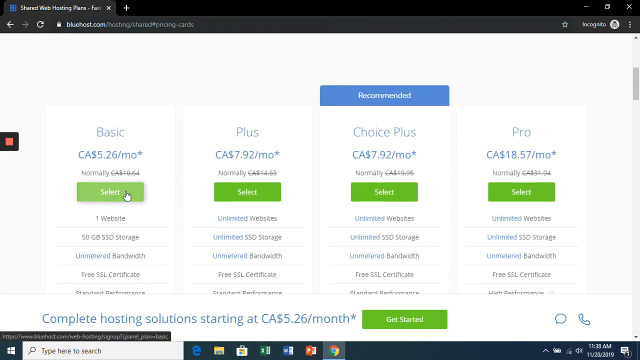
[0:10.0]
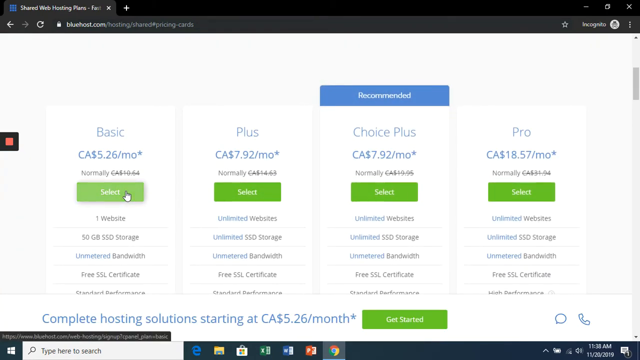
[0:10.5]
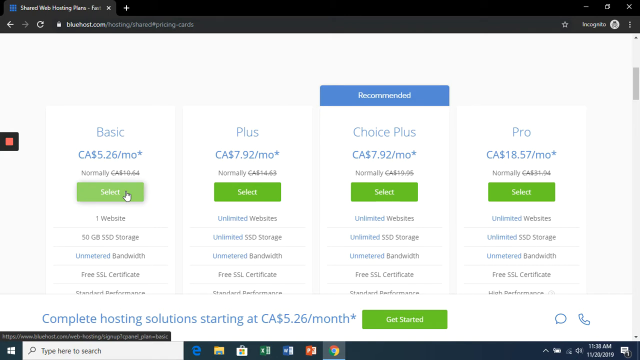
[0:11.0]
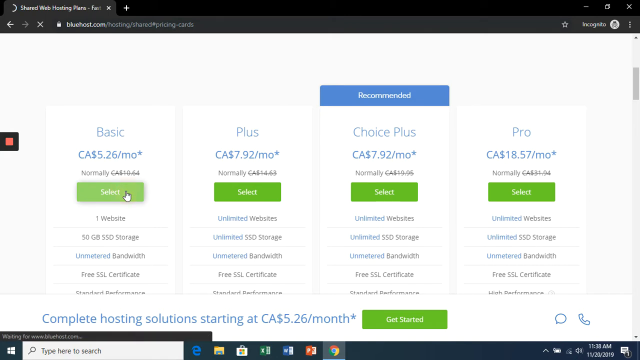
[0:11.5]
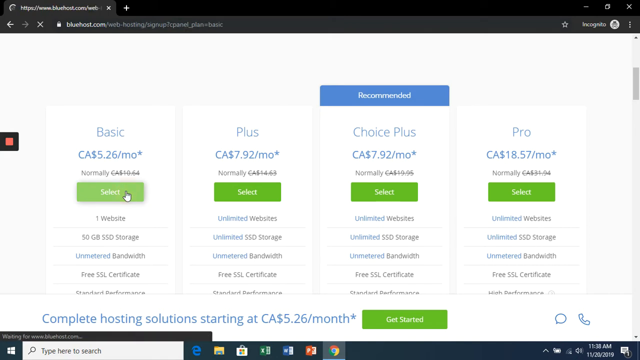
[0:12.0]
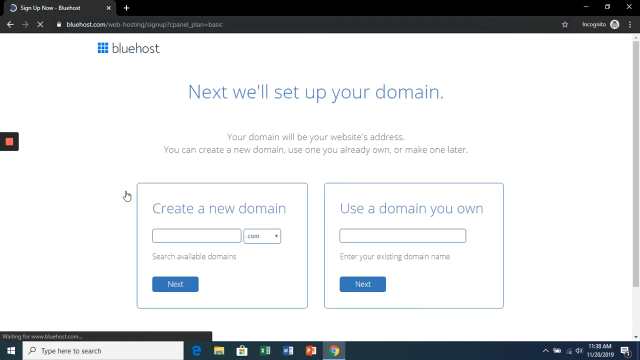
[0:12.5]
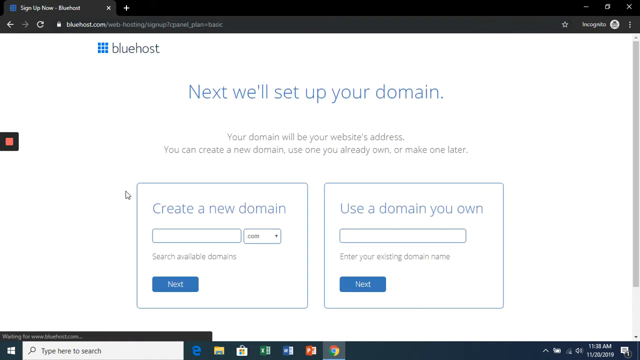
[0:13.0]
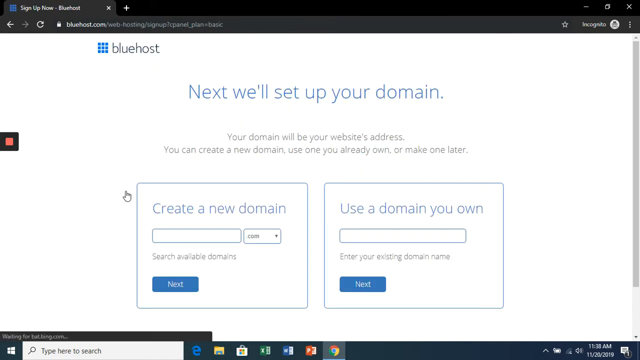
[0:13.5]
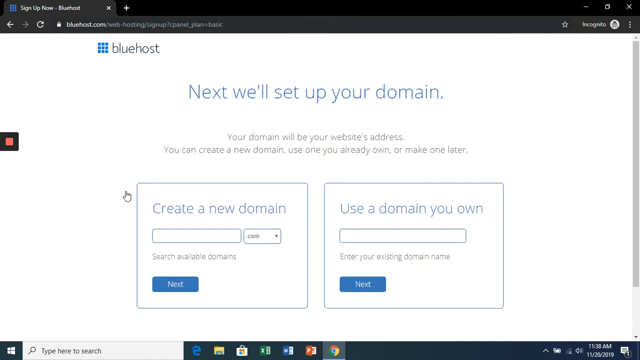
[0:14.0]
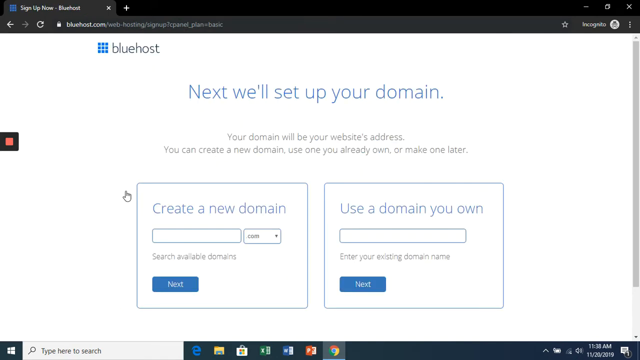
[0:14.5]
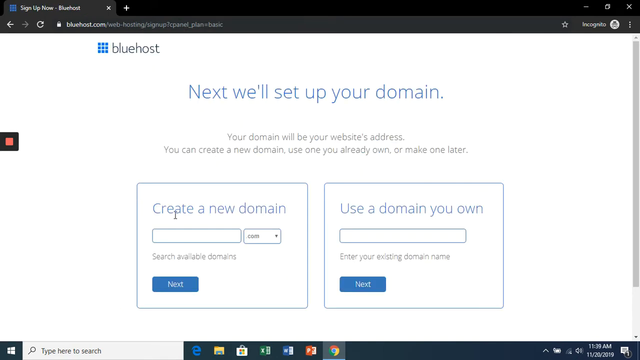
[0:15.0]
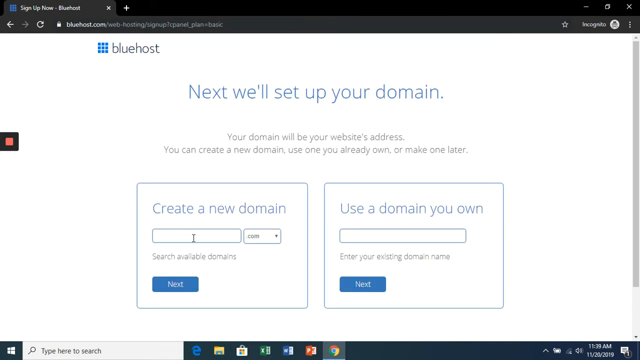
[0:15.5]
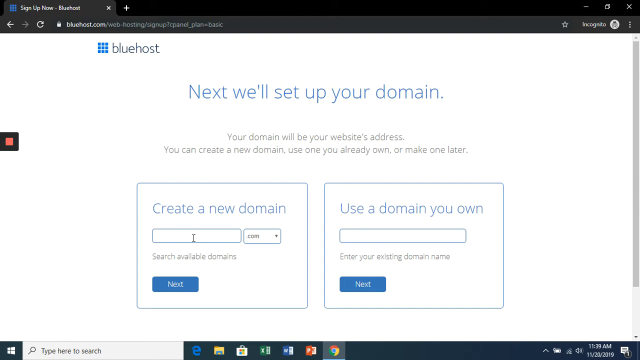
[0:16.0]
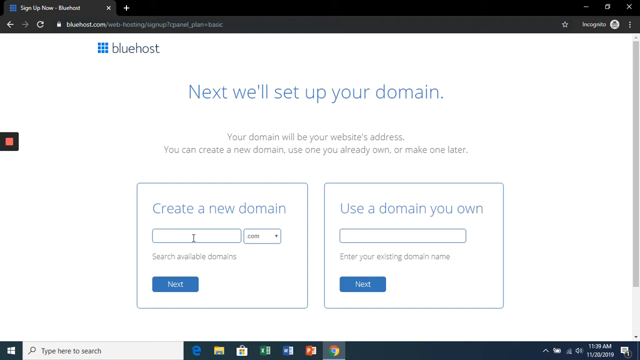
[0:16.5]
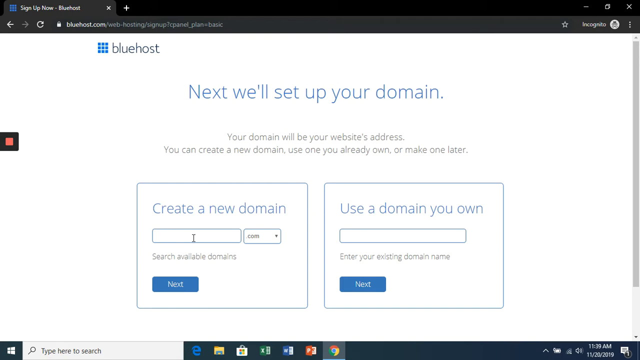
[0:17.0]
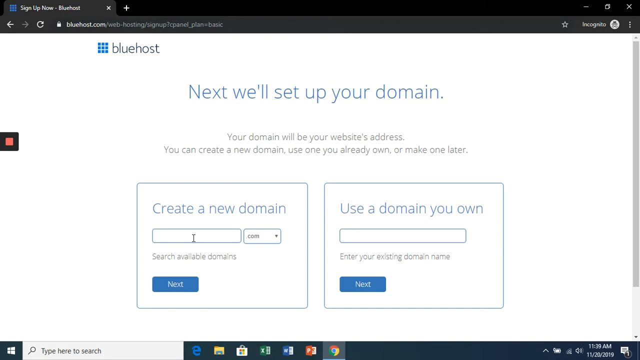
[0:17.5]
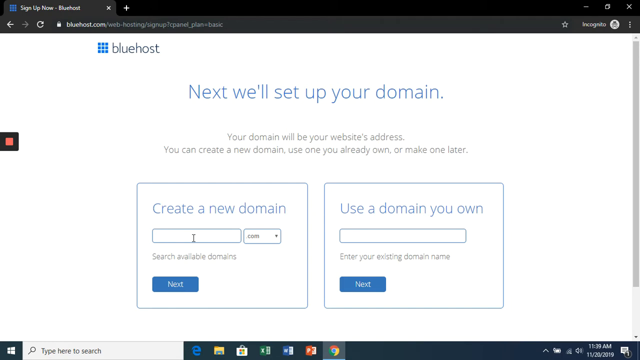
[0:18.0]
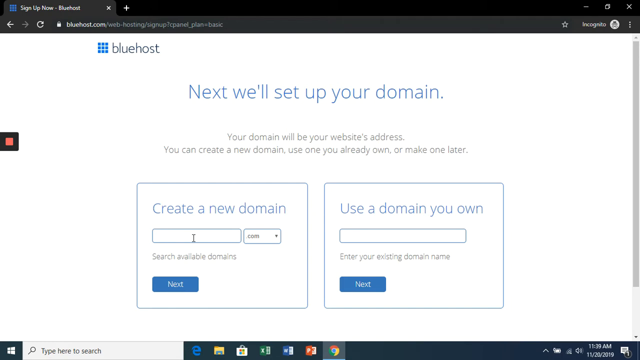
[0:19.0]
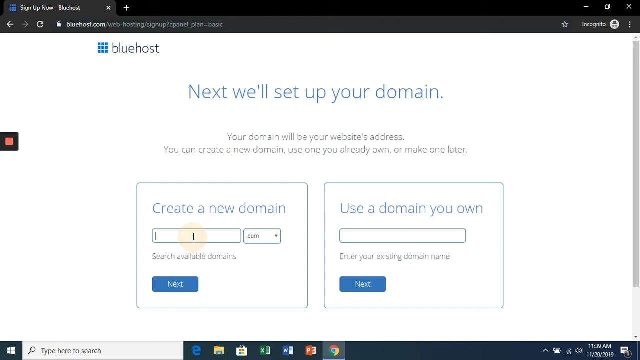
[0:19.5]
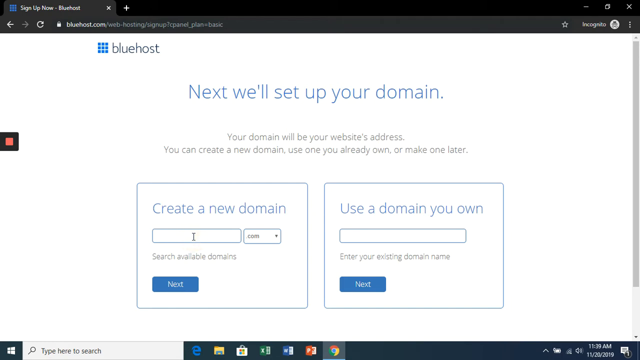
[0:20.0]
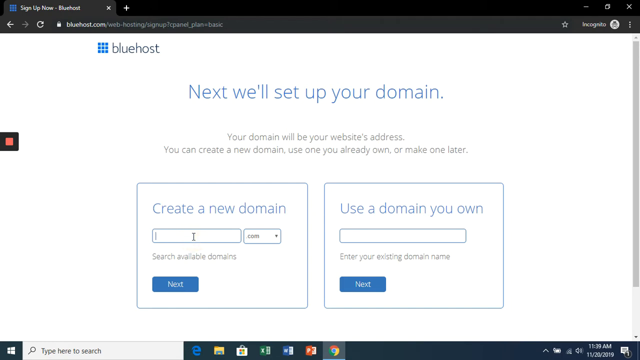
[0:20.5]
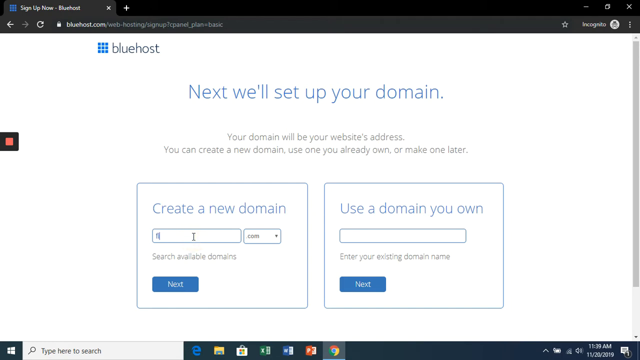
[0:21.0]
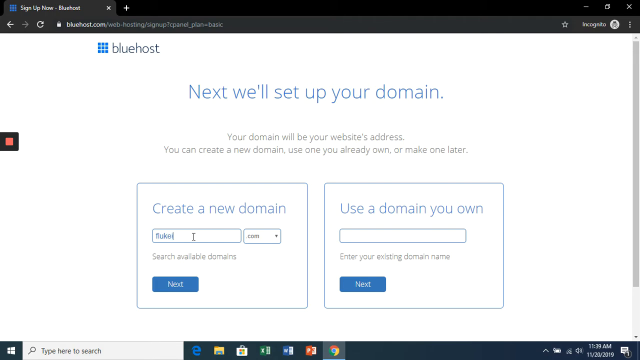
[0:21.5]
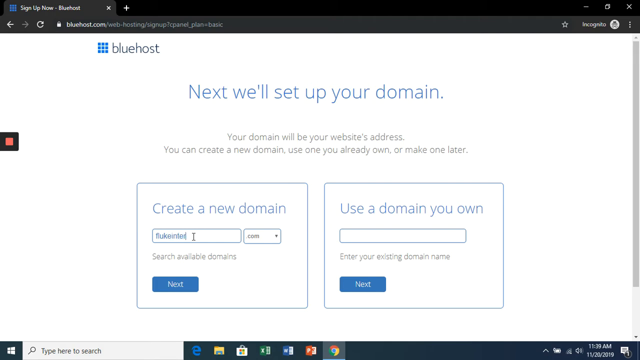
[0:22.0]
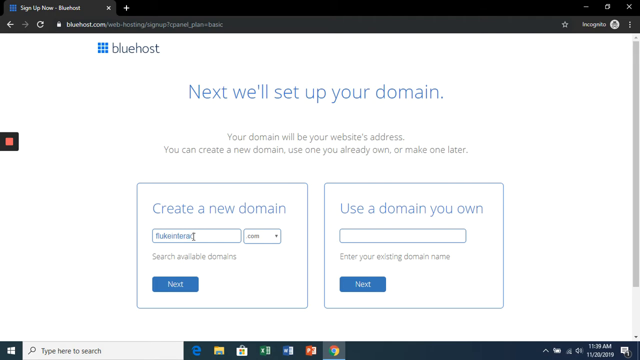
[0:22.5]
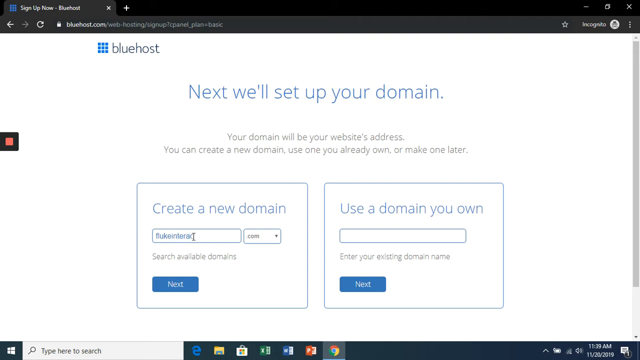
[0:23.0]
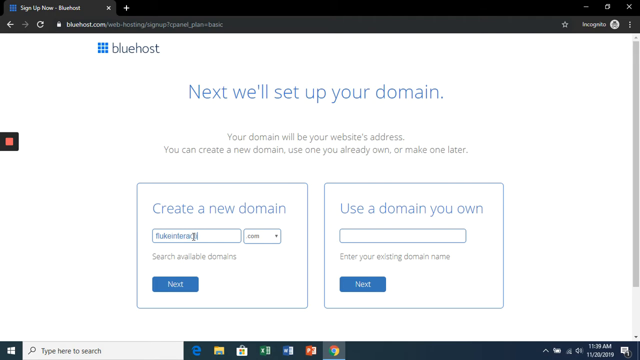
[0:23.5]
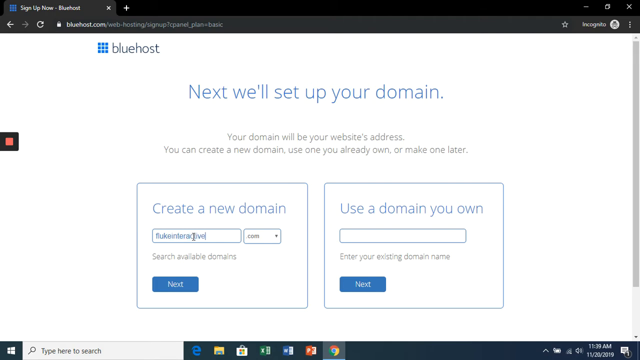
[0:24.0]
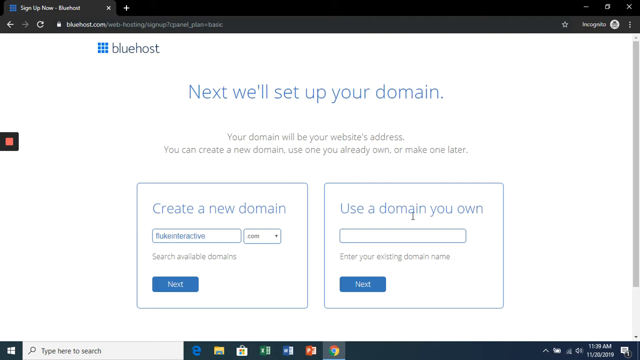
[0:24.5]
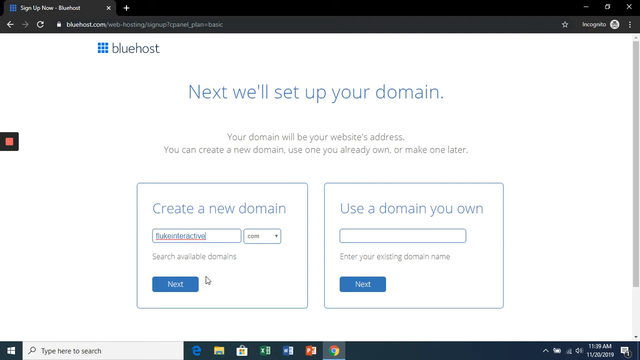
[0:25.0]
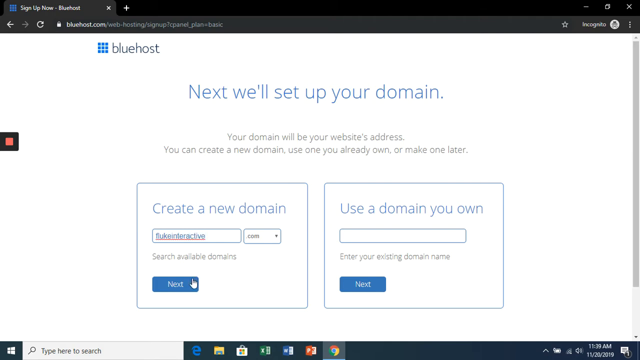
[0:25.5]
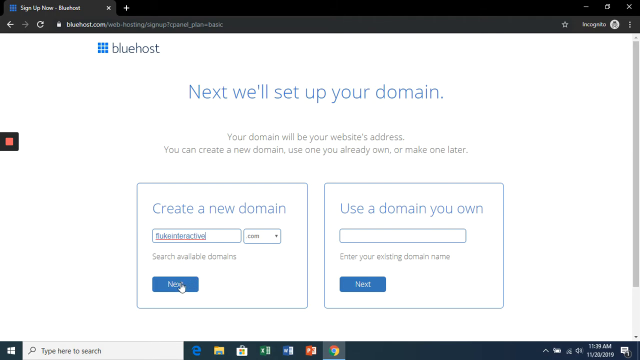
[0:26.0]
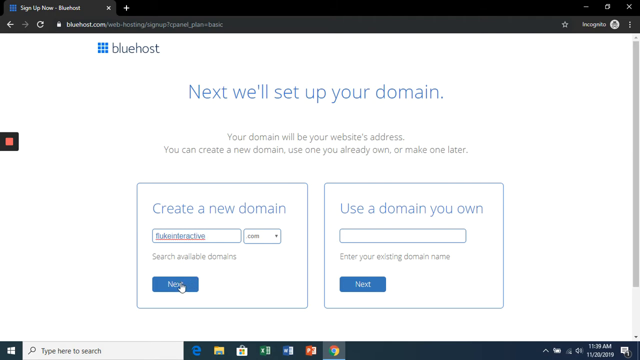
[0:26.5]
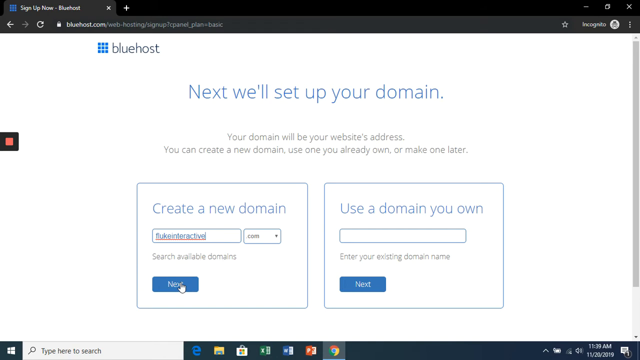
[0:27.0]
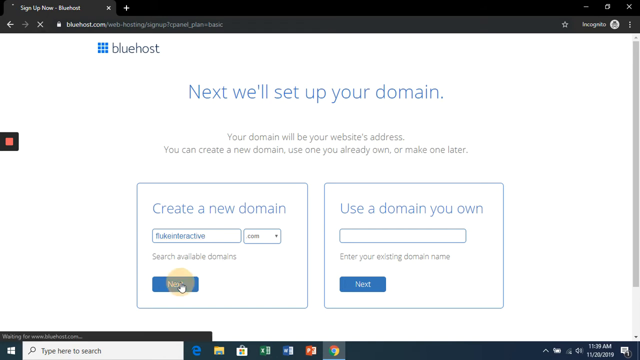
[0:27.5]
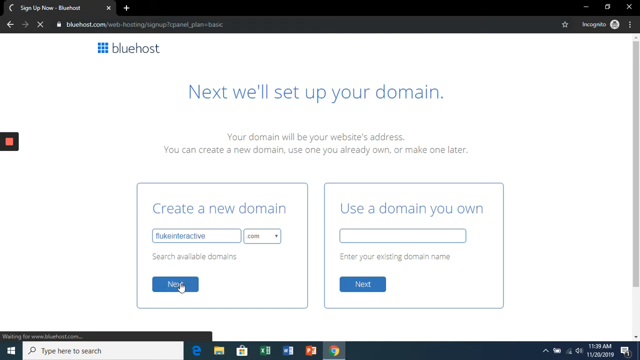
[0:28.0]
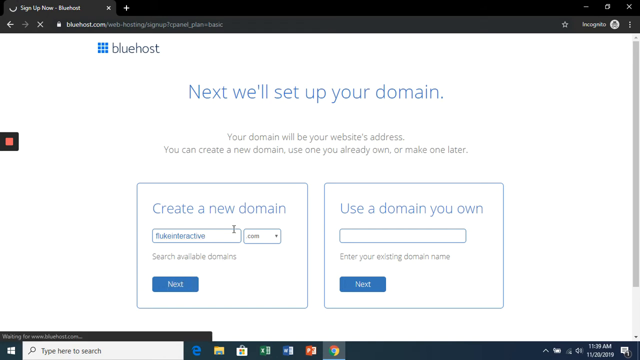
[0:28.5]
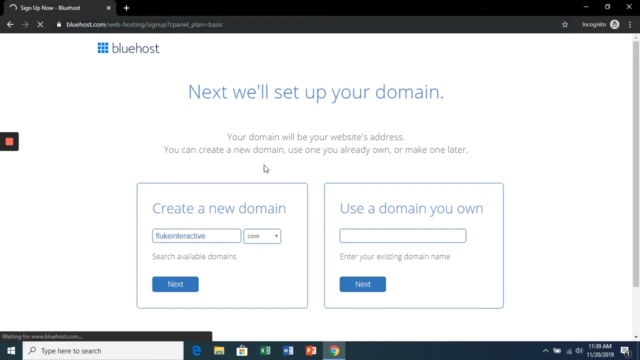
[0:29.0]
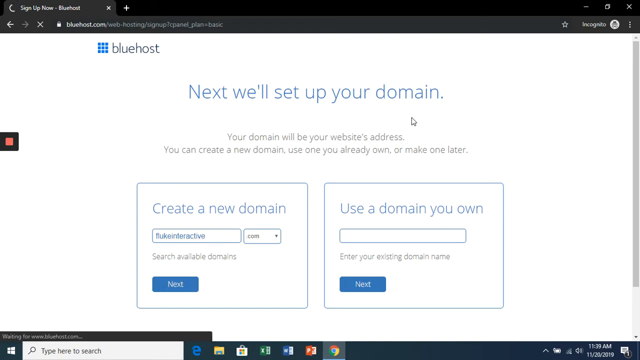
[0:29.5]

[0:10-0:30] The Bluehost.com page with a white background shows four plans, basic, plus, choice plus and pro, with prices including $5.6 a month and $8 a month and some different options on the plus and choice plus plans; "recommended" appears above the choice plus plan. The user clicks into the basic plan and selects it. Another Bluehost.com screen appears with blue text reading "next, we'll set up your domain". It offers two options: choosing a domain, with an input field for it, or using a domain already owned. The user goes to the input for creating a new domain, enters some text, and clicks the blue next button with white text on it.